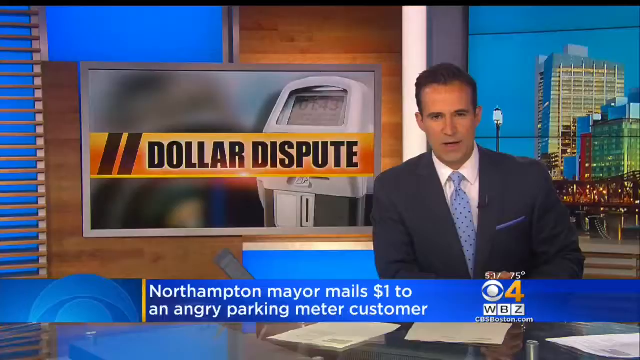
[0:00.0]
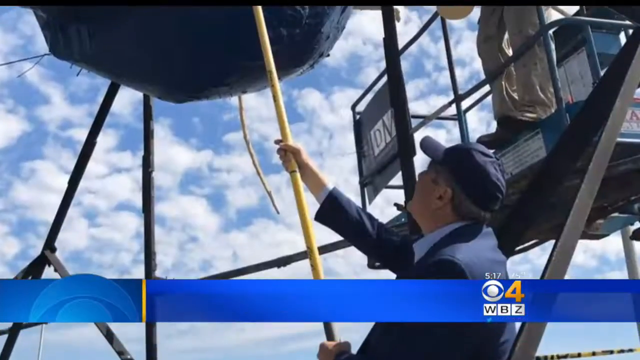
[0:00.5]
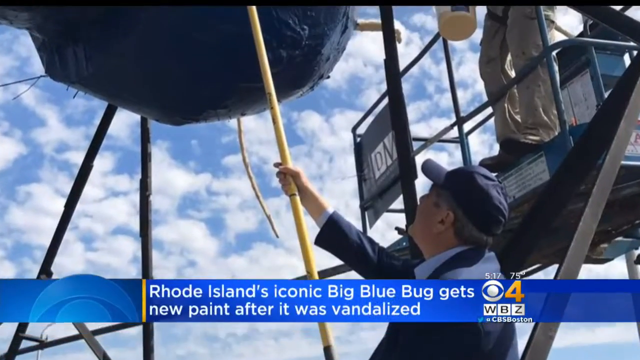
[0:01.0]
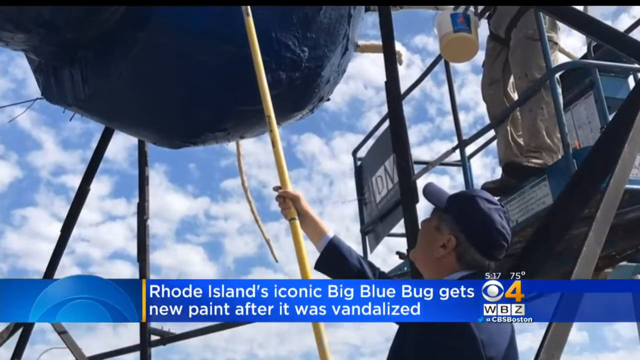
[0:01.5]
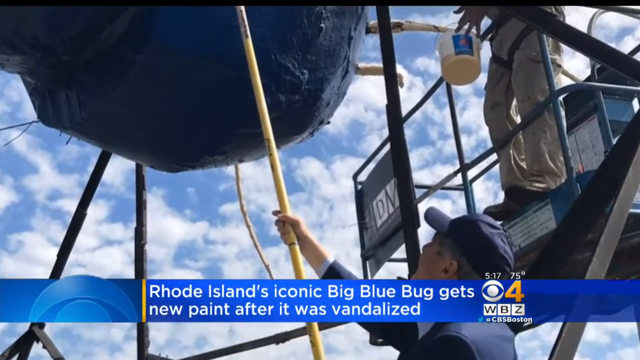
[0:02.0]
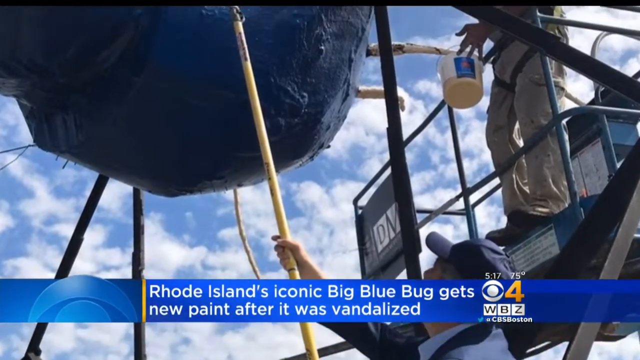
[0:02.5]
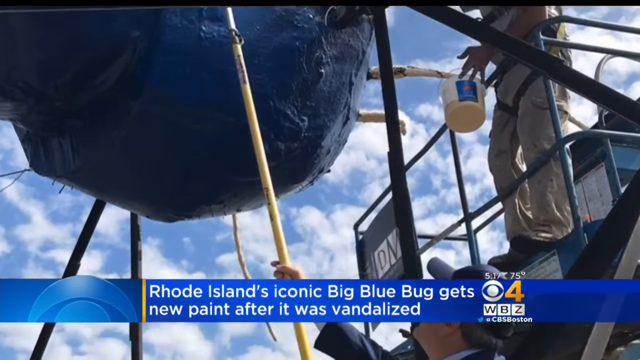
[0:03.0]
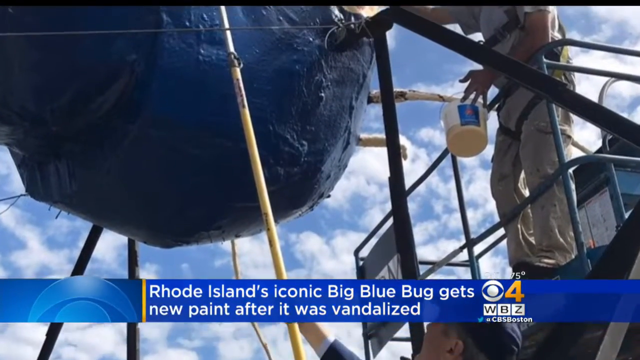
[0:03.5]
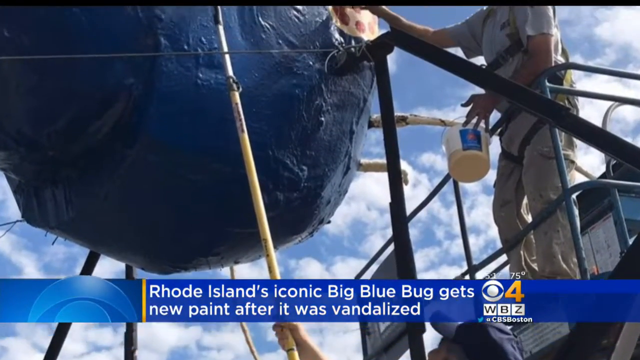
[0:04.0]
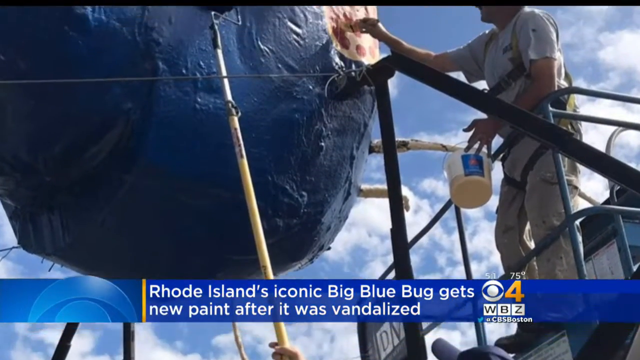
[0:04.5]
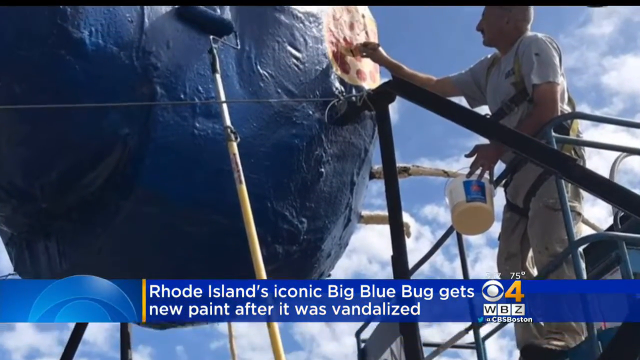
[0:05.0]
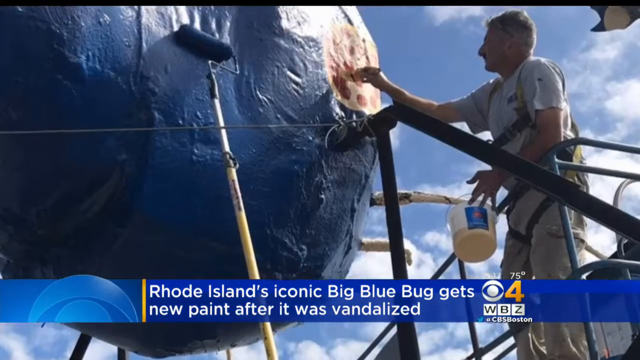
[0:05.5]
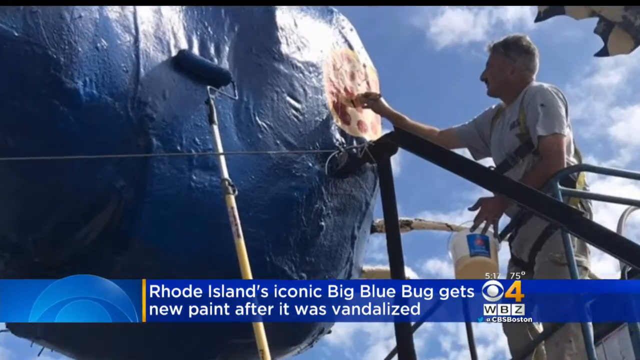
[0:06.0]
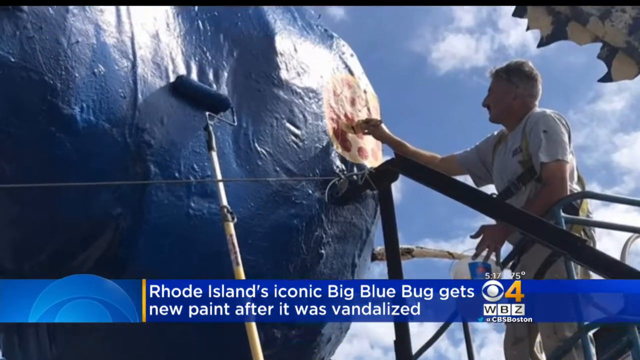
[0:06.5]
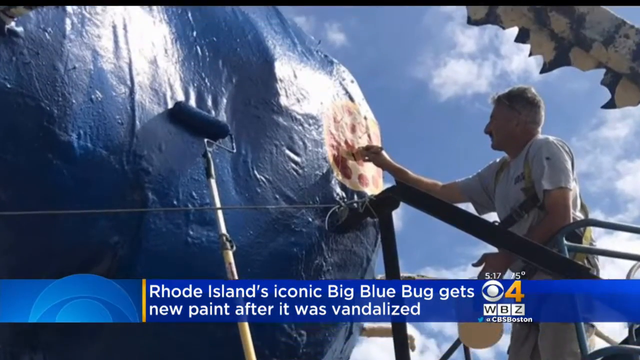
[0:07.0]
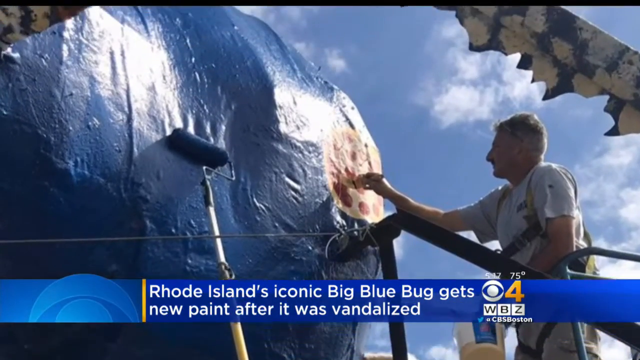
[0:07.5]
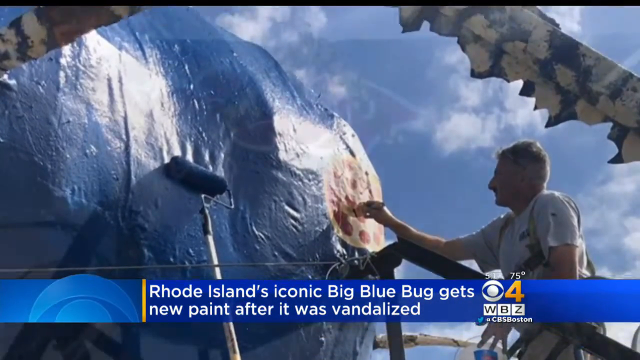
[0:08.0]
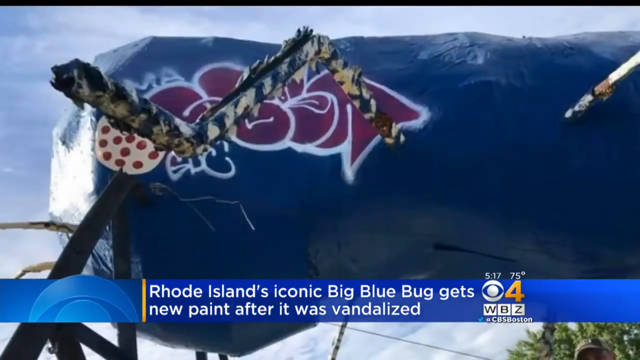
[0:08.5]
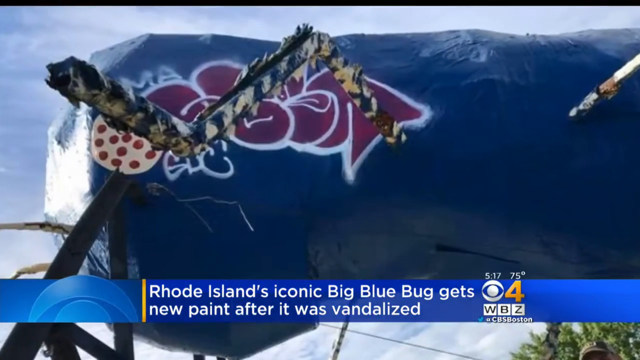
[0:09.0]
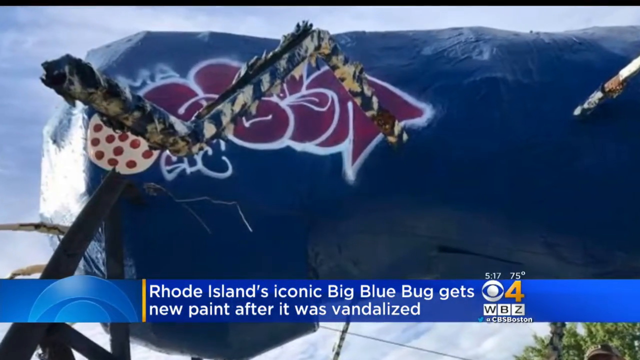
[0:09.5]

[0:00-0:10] A news broadcast opens in a newsroom, where a man in a black suit is inside the room. A screen in the background reads "dollar dispute," and a screen on the right side shows a view of a city. A headline reads "Northampton mayor mails $1 to an angry parking meter customer." The headline then changes to "Rhode Island's iconic big blue bug gets new paint after it was vandalized." The scene shows two people painting outside; one wears a suit and a hat, and the other wears painting clothes.